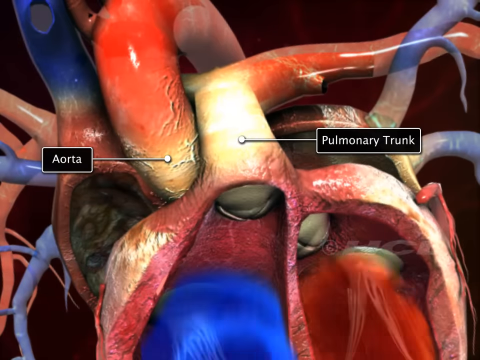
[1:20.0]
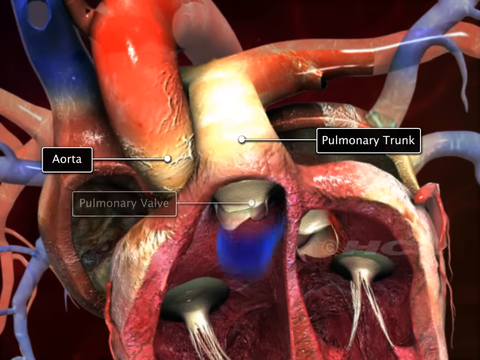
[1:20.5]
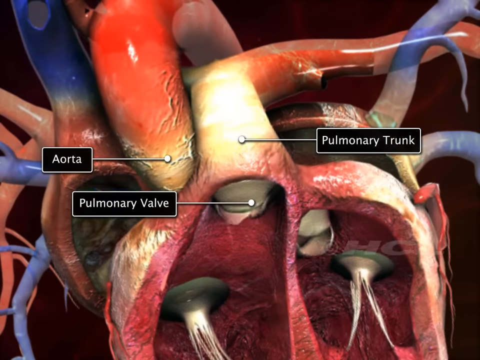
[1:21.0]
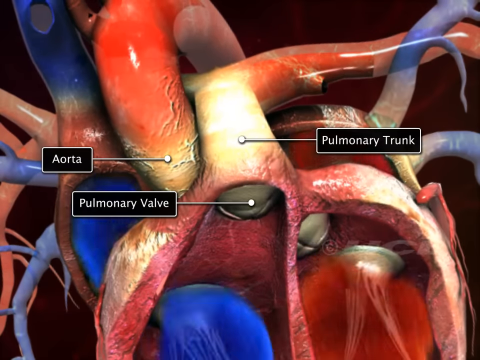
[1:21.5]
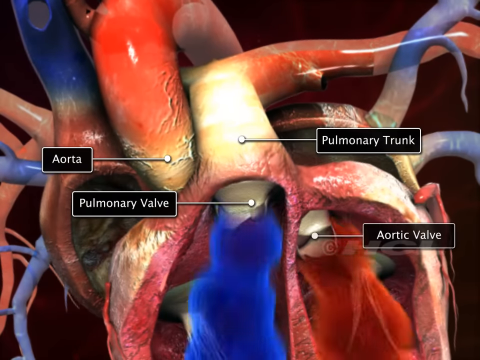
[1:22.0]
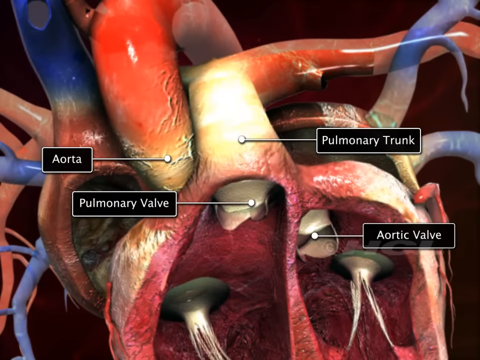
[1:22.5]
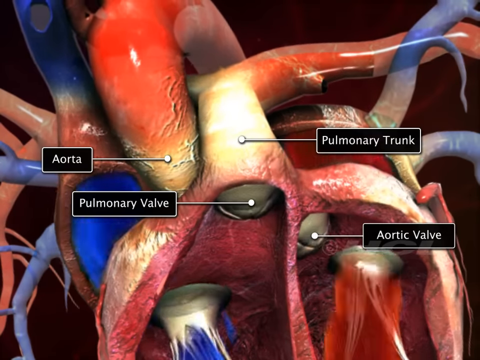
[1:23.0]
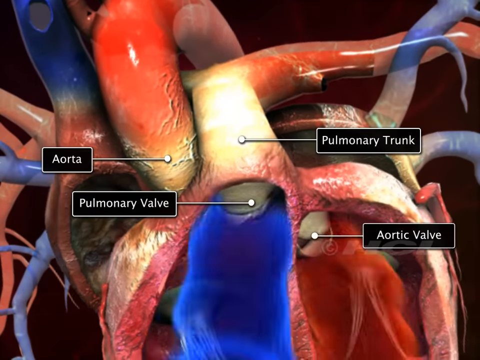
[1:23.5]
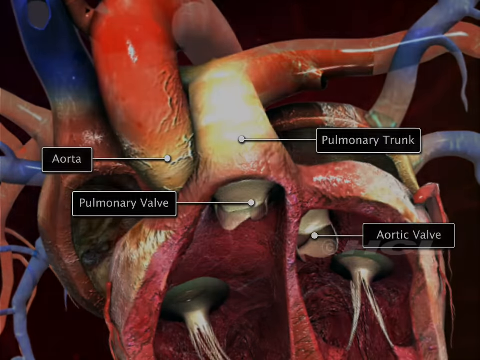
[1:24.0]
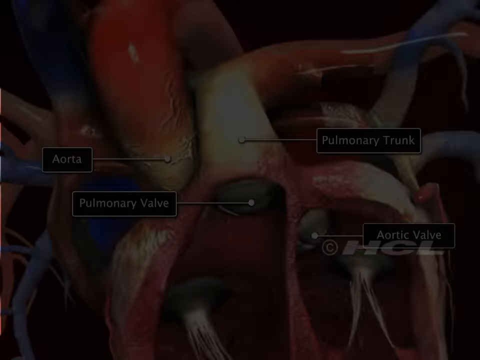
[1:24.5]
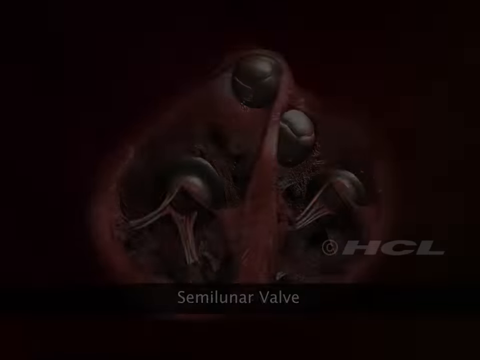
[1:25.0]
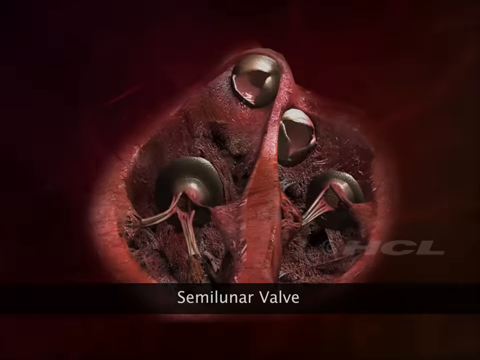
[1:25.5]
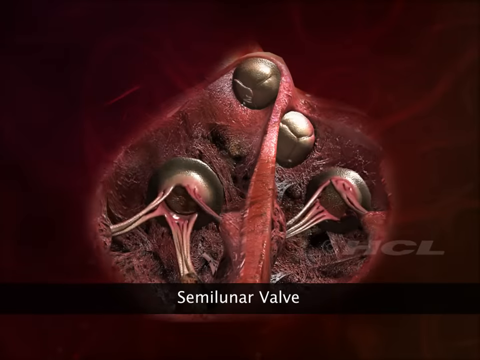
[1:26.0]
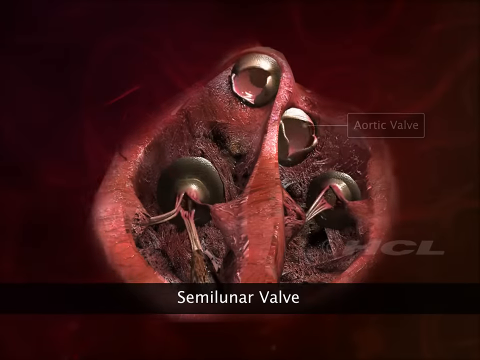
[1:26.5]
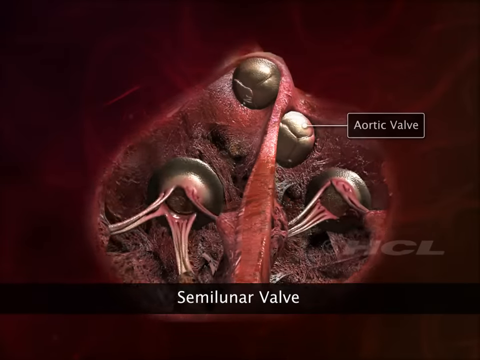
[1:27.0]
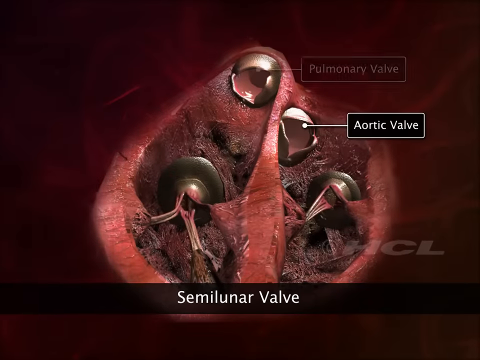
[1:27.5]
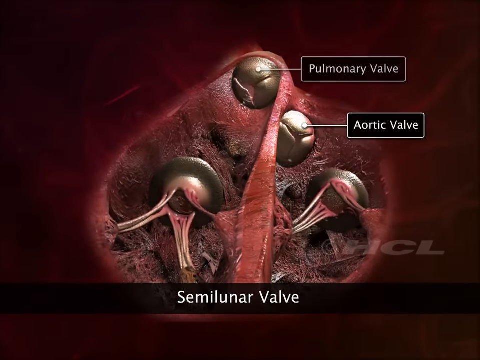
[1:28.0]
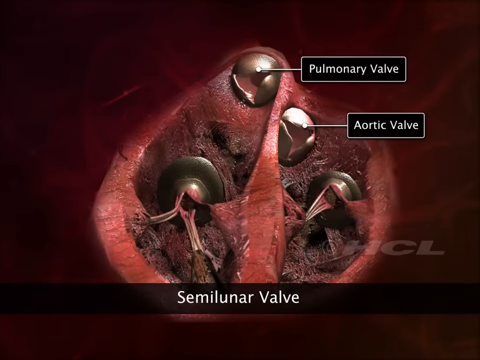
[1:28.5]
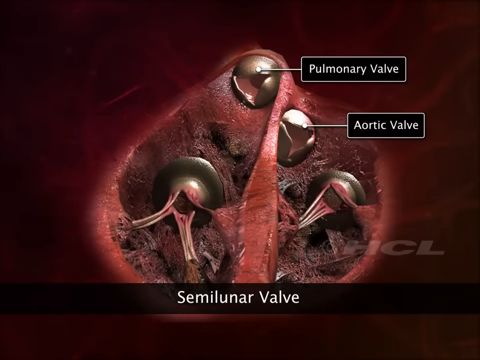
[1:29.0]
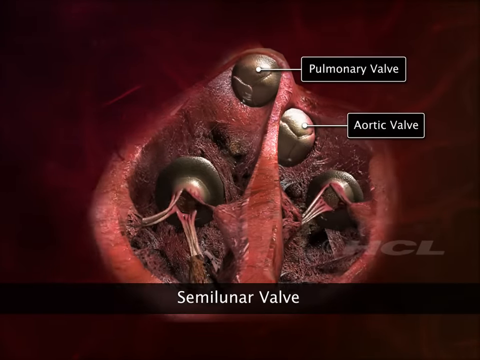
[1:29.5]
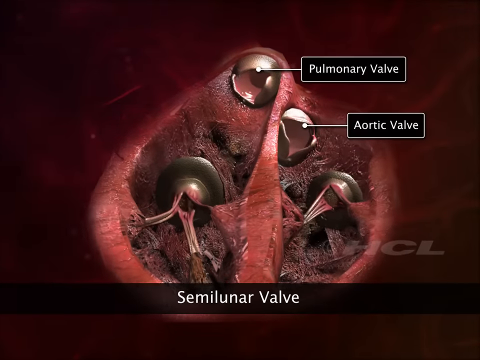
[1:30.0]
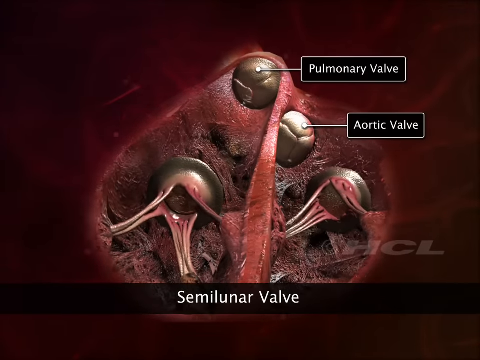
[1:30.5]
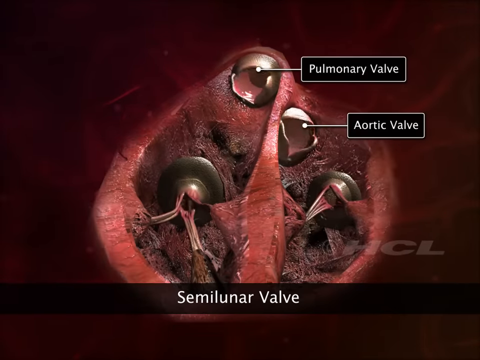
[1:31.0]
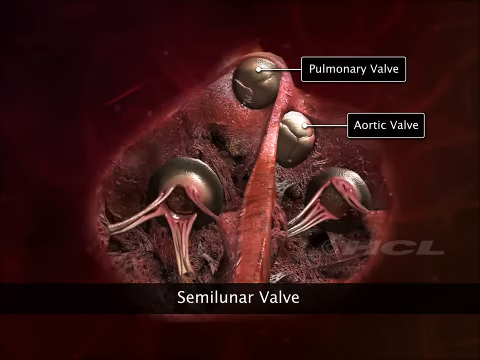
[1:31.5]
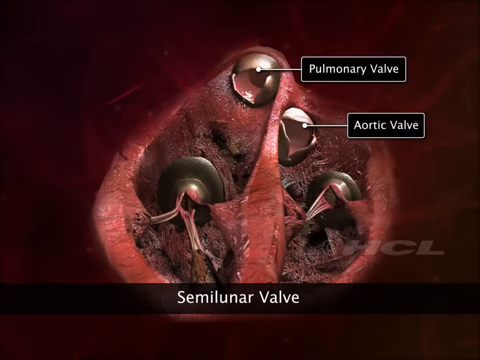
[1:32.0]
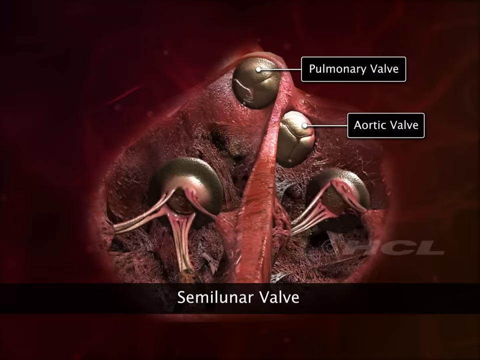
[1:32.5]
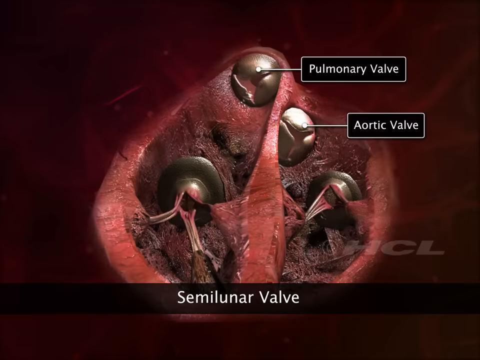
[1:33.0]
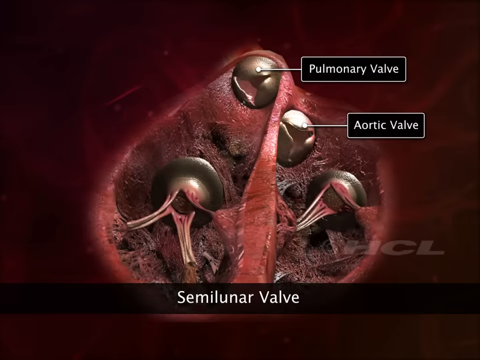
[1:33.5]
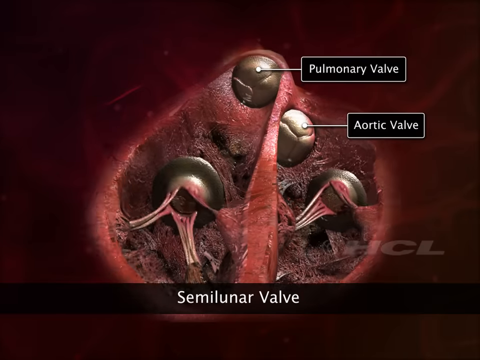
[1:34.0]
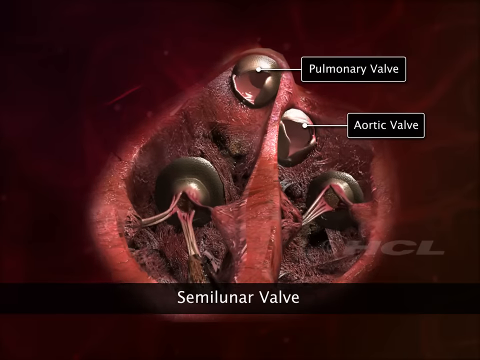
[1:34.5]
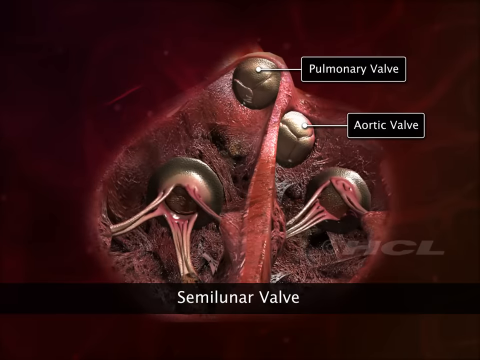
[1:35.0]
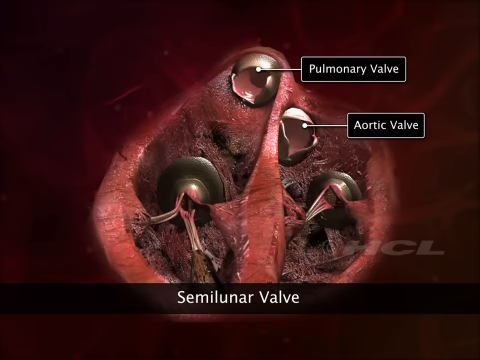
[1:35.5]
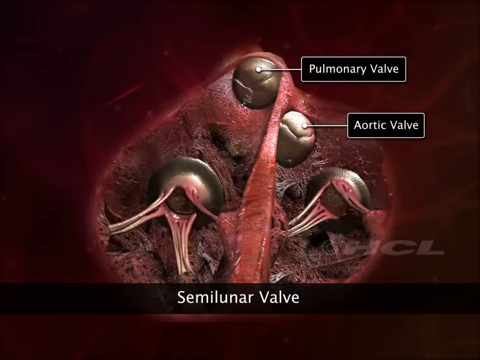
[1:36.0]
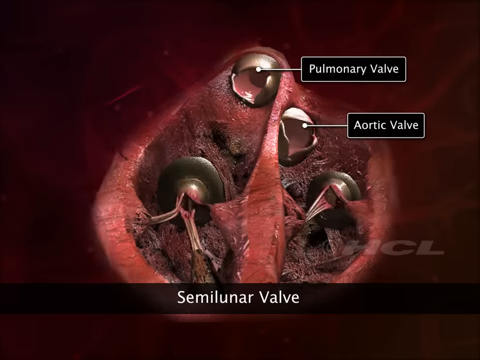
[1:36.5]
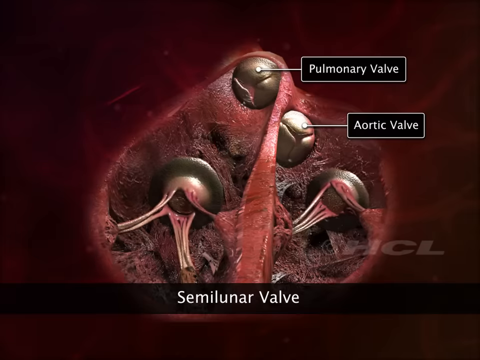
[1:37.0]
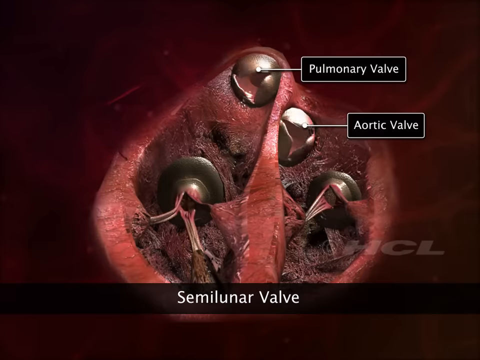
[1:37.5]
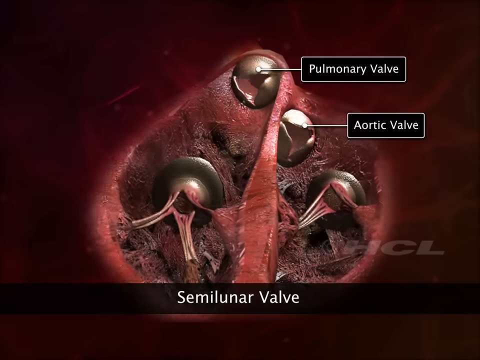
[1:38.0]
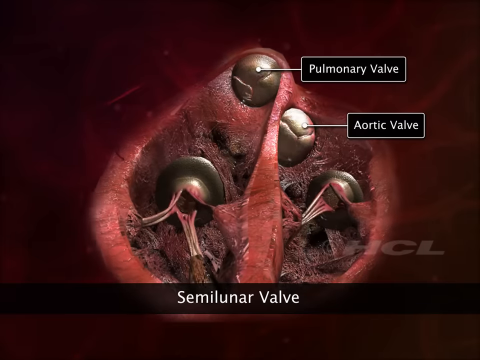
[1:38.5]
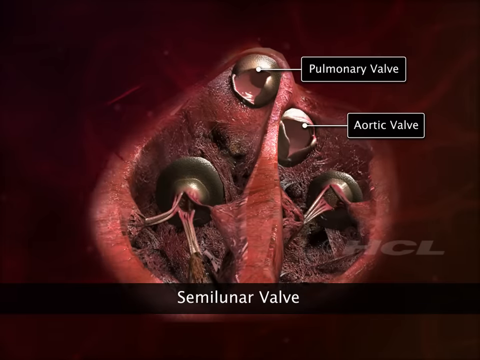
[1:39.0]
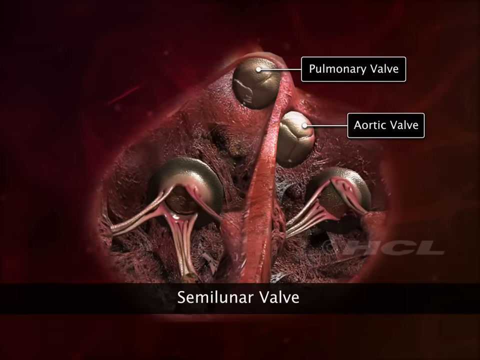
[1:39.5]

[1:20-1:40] An image of the heart, open and cut in half, shows the different parts of the valves and how it beats, pulling and pushing blood into and out of the heart. It first points out where the aorta and the pulmonary trunk are, then where the pulmonary valve and the aortic valve are. The scene shifts to something called the semilunar valve, showing many valves beating and pumping, with the pulmonary valve and aortic valve inside the semilunar valve area. This area is highlighted as if it is kind of zooming into the heart, and little pockets inside the heart open and close as it beats, over and over. The heart beats throughout this sequence, with red liquid and blue liquid sucked into the aortic and pulmonary valves and pushed out by the trunks and the aorta. The heart is a 3D image with lots of red, blue and white and lots of organic material.